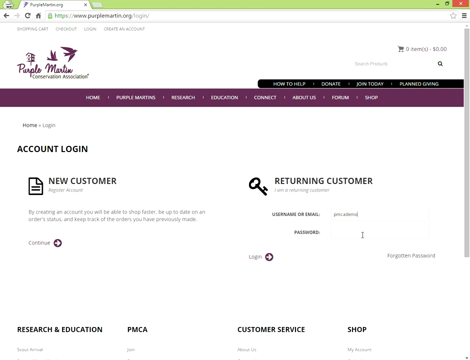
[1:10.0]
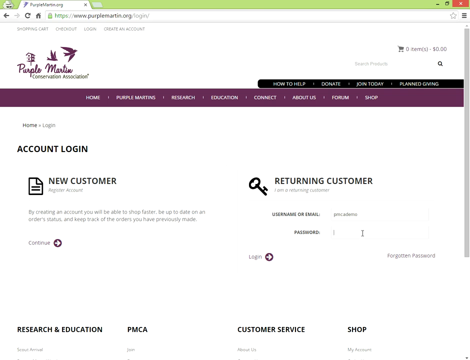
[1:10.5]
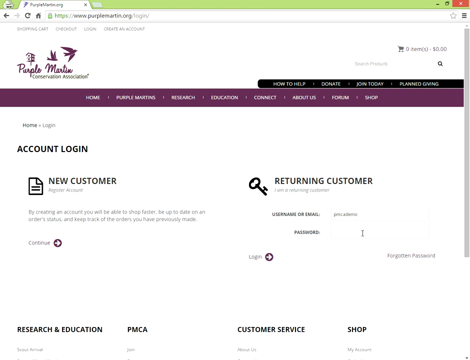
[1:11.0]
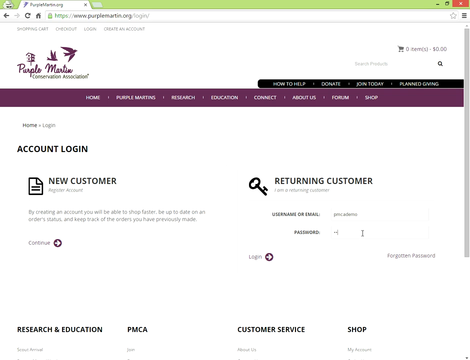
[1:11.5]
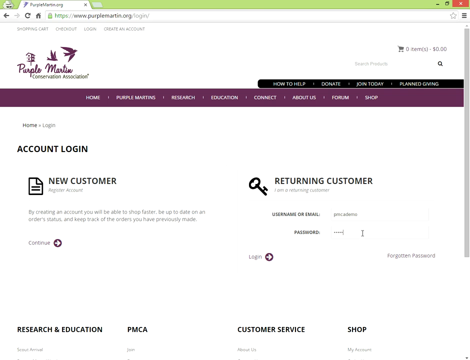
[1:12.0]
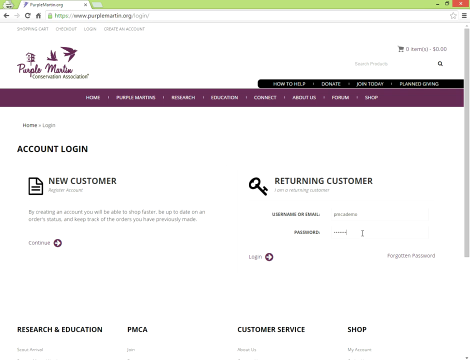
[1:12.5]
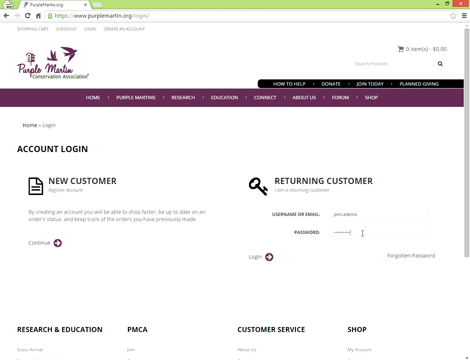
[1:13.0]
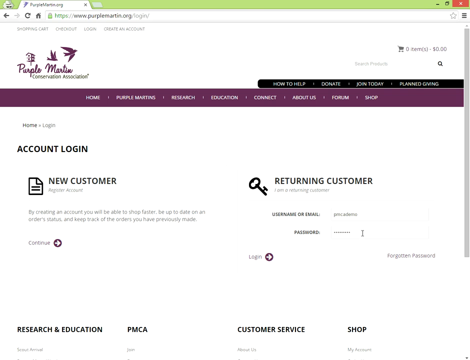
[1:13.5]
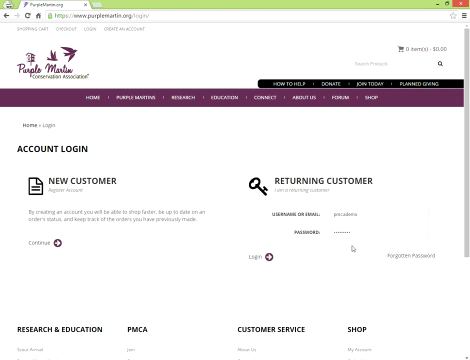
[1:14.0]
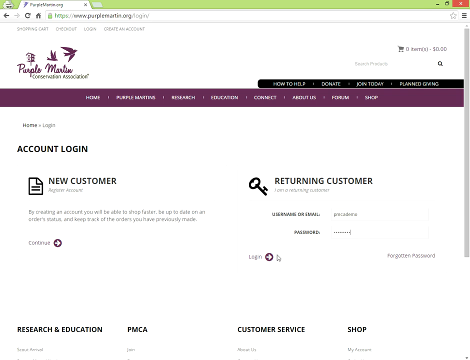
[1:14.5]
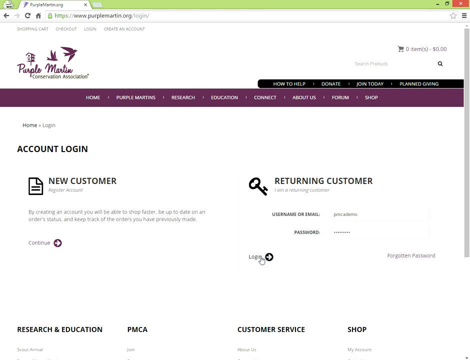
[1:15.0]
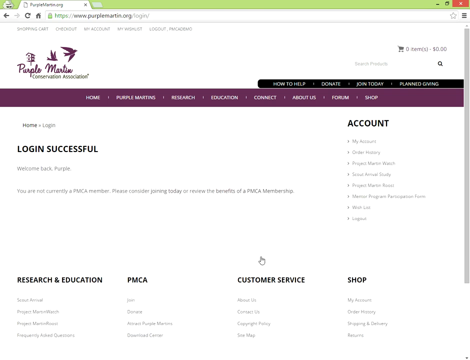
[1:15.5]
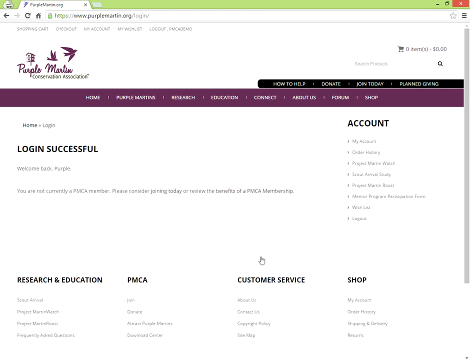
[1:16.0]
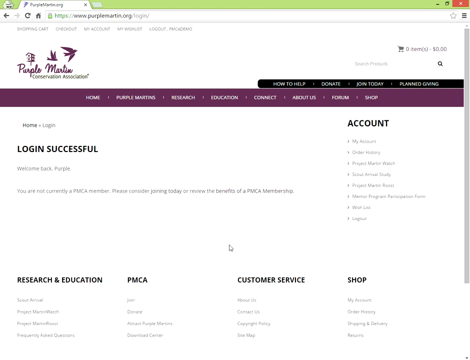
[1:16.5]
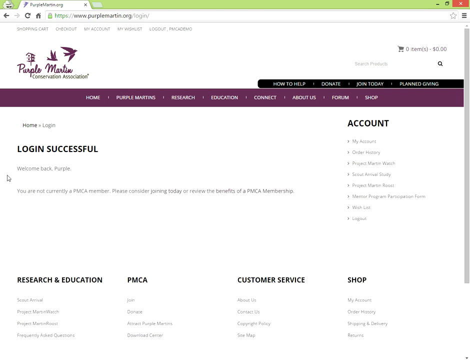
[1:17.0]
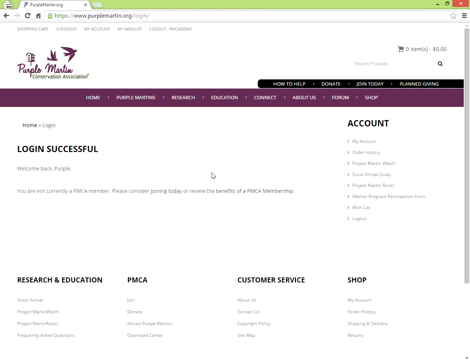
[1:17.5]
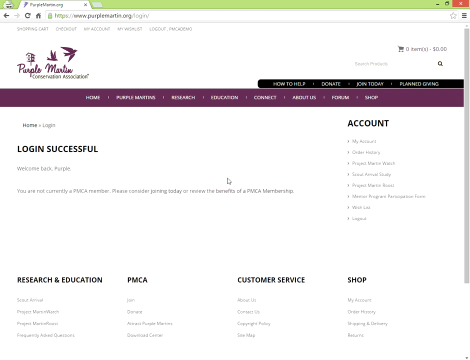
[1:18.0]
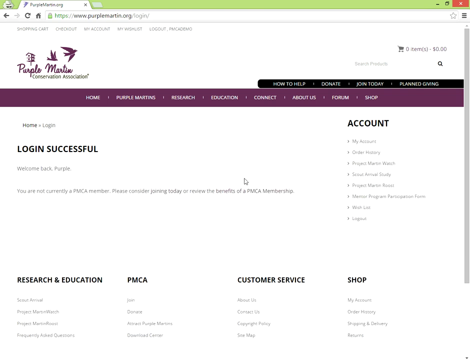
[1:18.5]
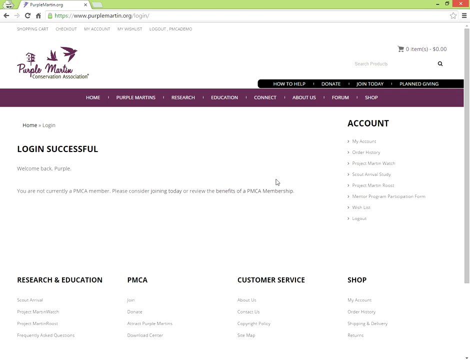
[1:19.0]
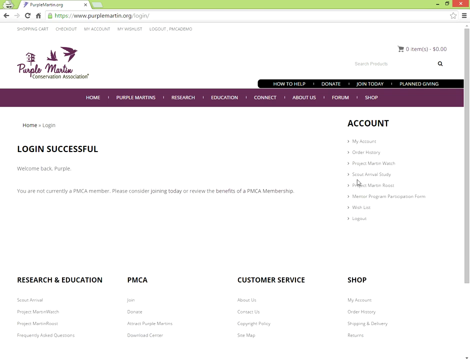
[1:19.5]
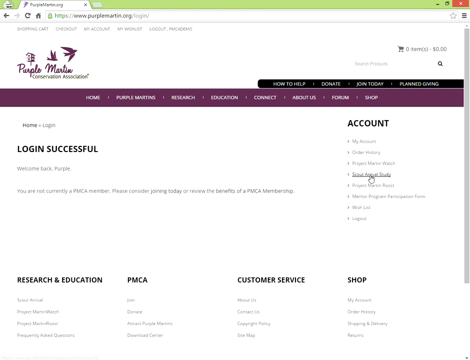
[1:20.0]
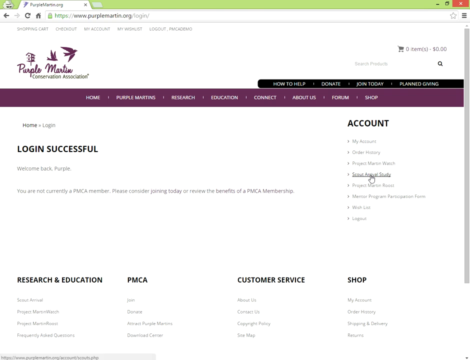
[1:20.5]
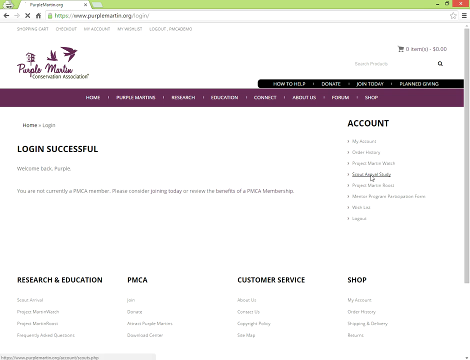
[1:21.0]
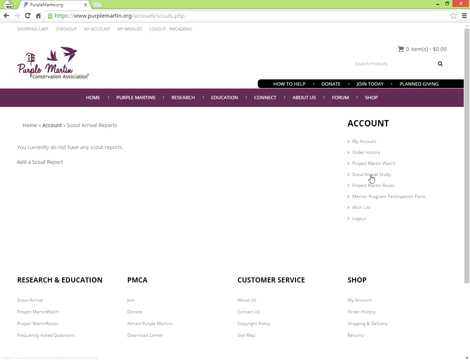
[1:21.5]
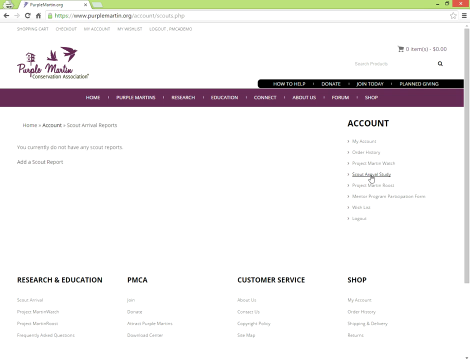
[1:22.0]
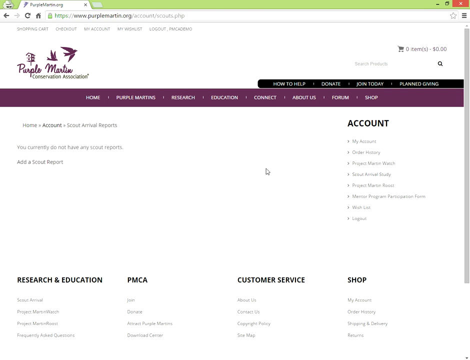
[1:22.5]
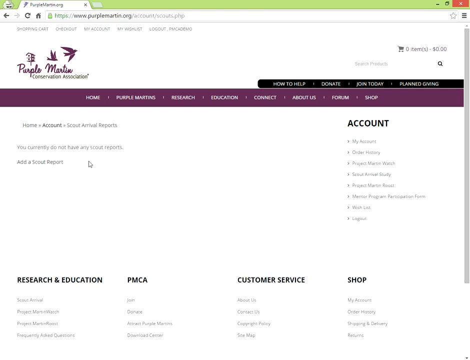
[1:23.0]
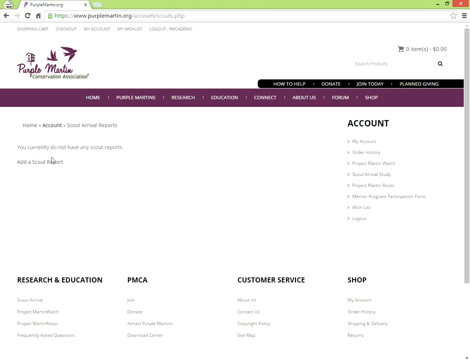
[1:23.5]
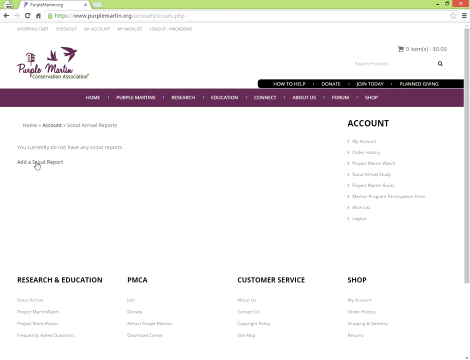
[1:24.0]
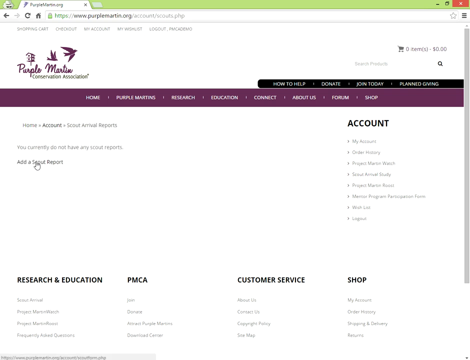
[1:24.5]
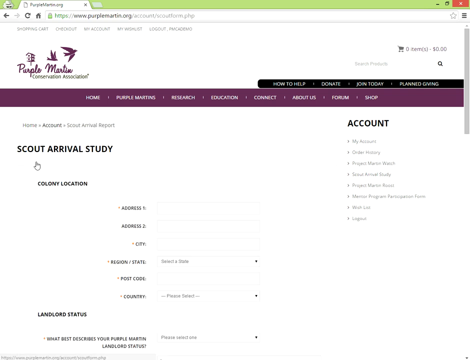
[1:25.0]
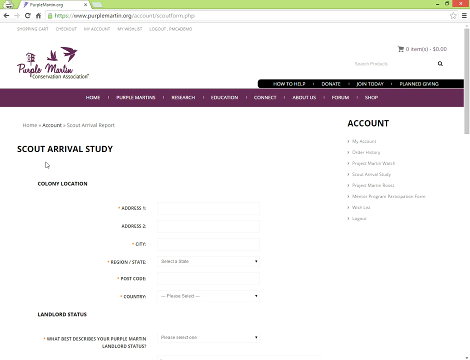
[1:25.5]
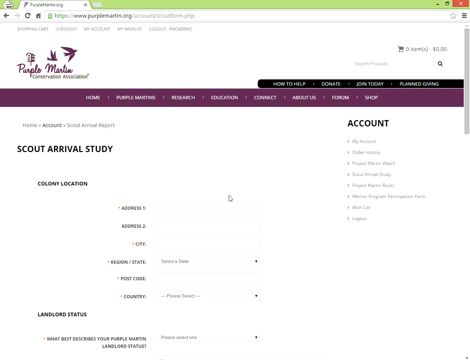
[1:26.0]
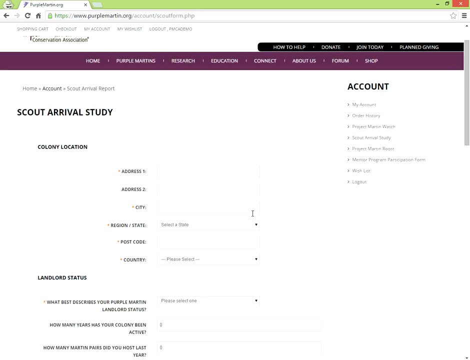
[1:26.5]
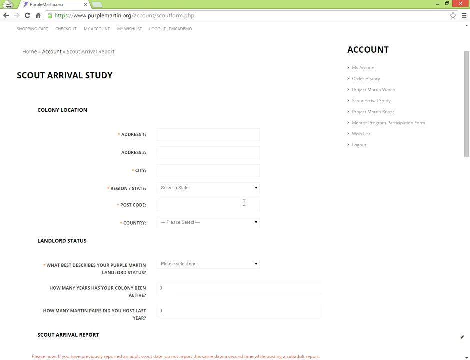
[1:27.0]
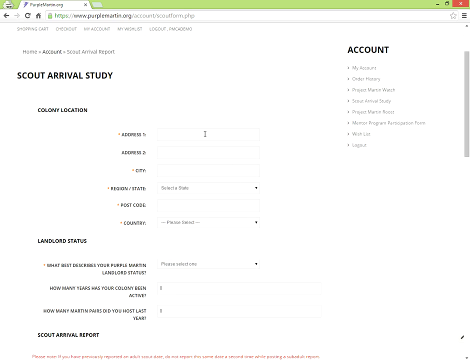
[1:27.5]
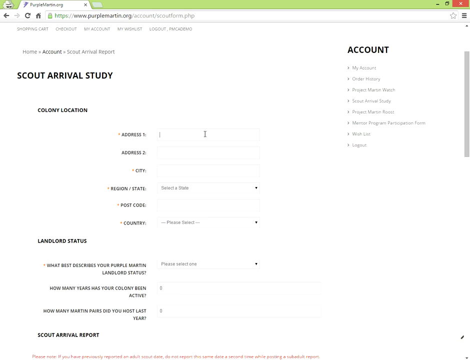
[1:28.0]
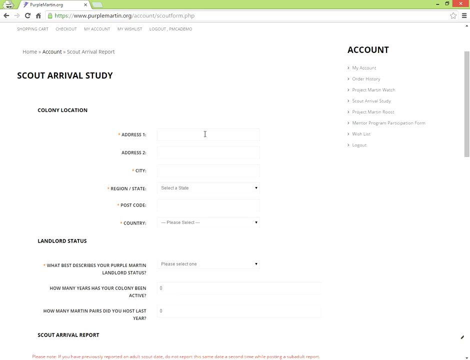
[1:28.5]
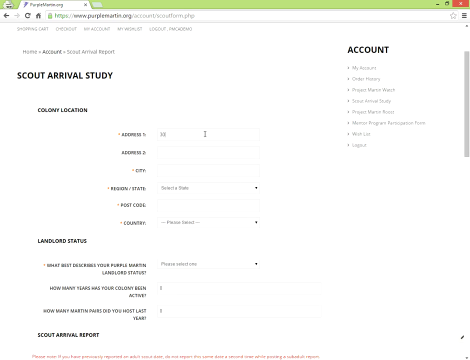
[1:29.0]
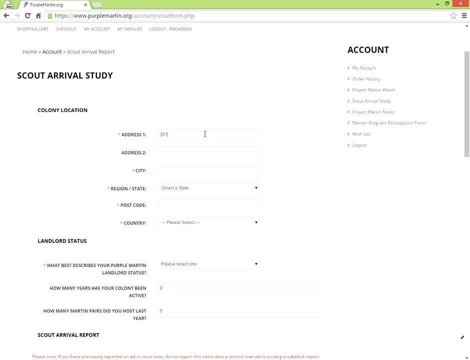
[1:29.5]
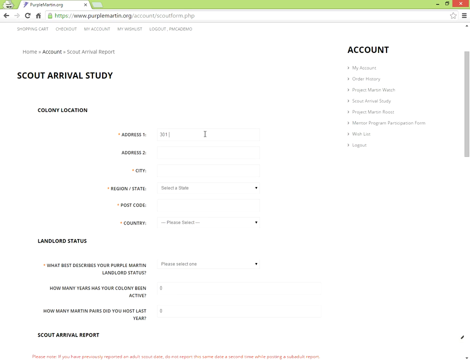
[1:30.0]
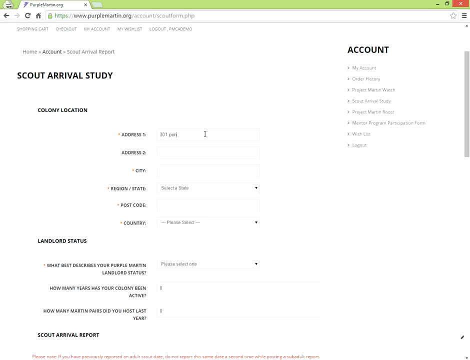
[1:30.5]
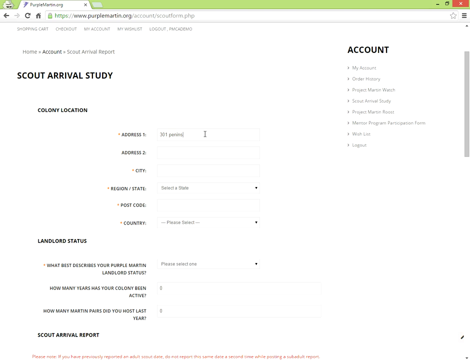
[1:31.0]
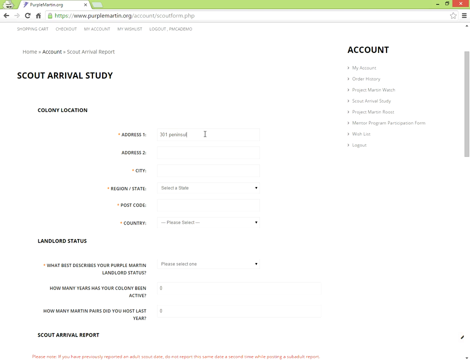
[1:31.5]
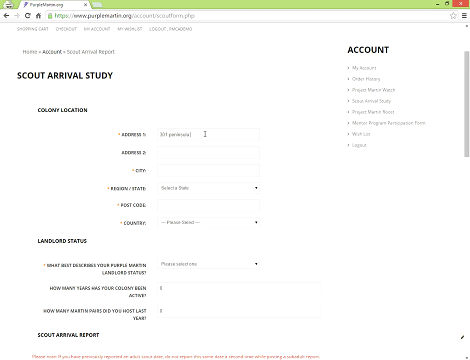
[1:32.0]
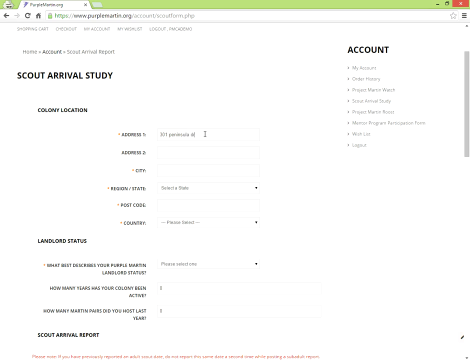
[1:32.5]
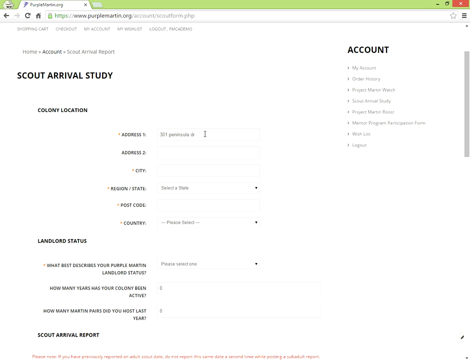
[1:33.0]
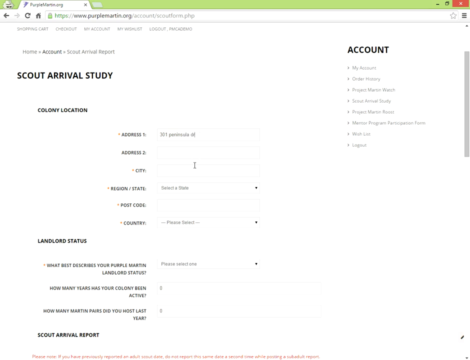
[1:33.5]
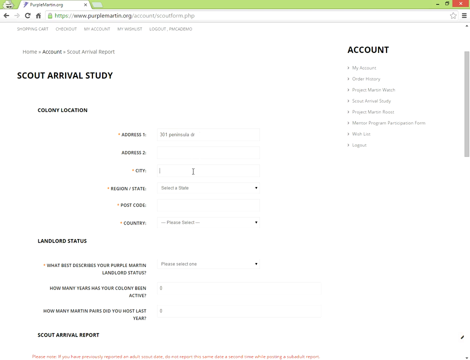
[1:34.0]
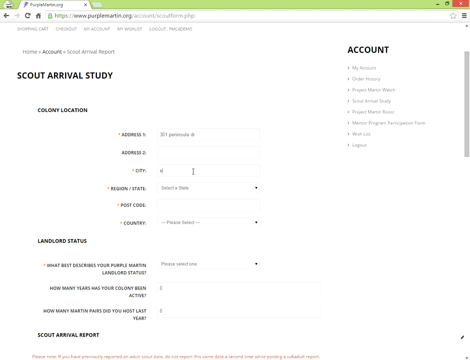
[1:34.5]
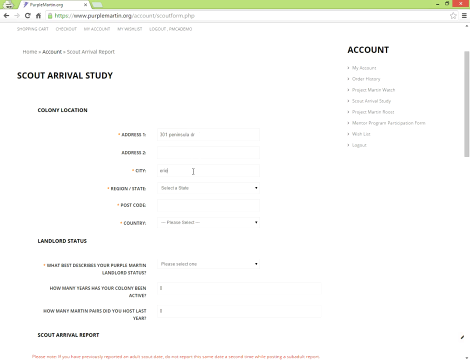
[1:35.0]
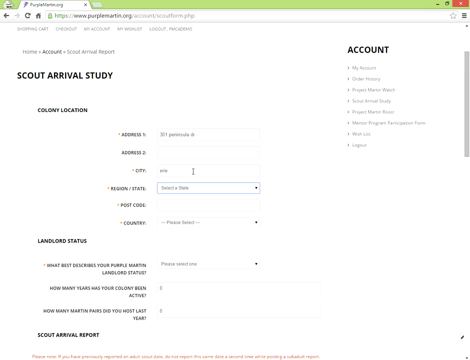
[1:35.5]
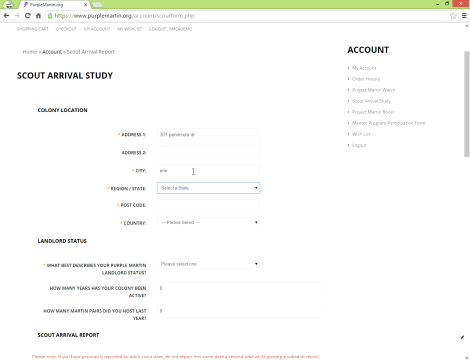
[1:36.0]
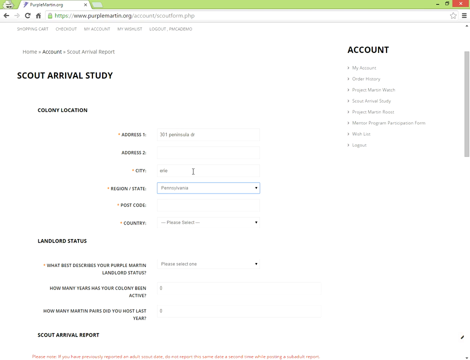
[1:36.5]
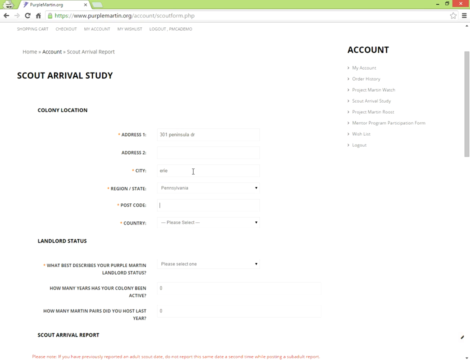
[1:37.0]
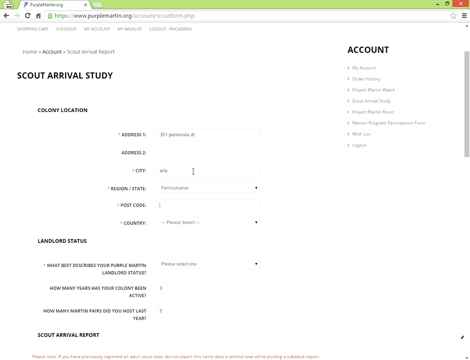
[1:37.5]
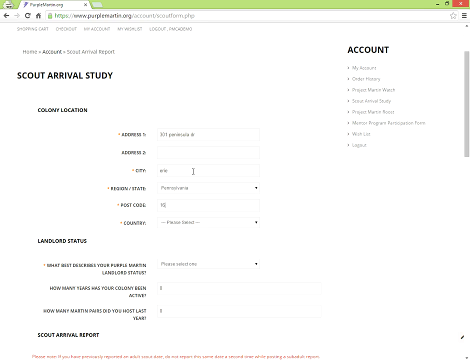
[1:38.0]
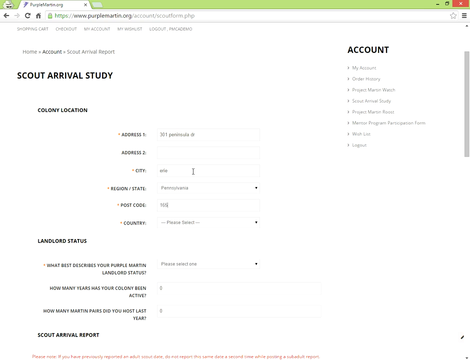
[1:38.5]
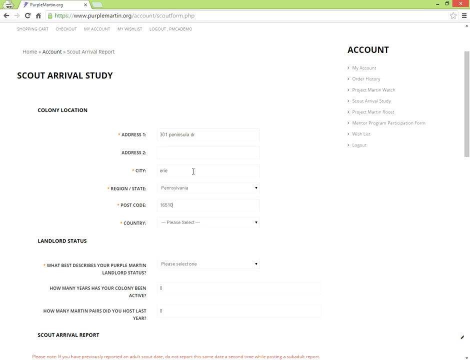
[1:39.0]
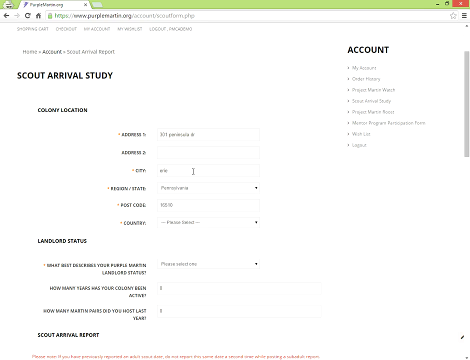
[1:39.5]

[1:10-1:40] The account login page is shown. The person enters a username and password, and a screen appears that says "login successful welcome back purple". On the right-hand side is a sidebar titled "account" with many options for managing accounts. One unreadable option is clicked, then "add a scout report", which leads to a form page titled "scout arrival study". The form begins with colony location and asks for address information; below that it says "landlord status" and asks for more information. The page scrolls down quite a bit, and many of the questions appear to be required. The main headers are in black, all caps, sans serif, and the smaller text appears to be dark gray sans serif.